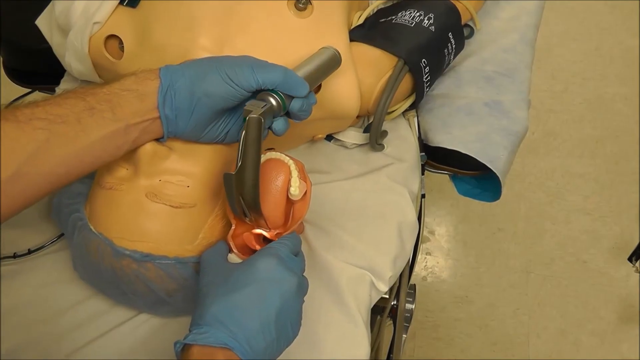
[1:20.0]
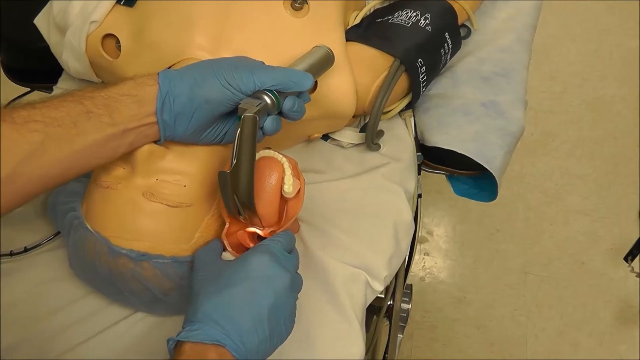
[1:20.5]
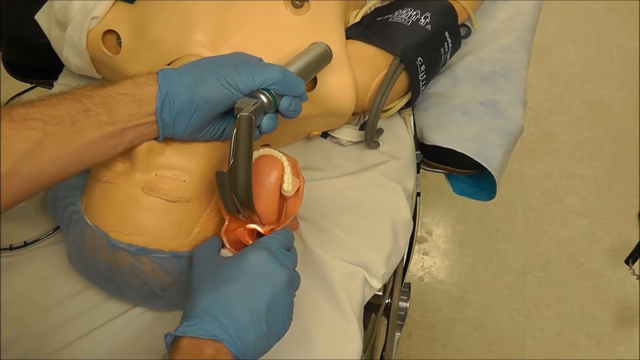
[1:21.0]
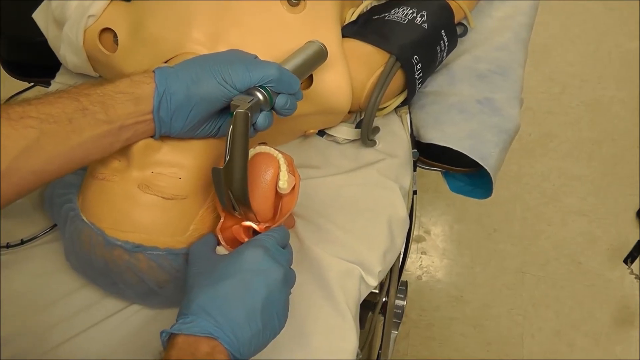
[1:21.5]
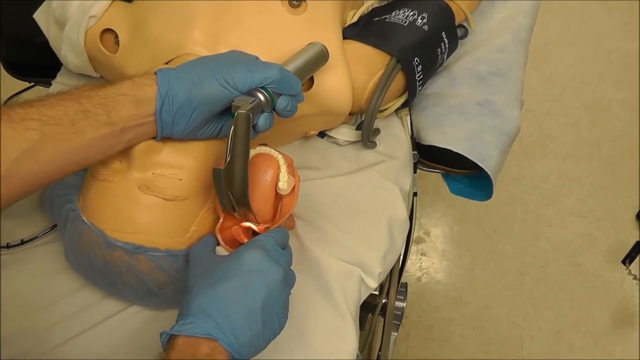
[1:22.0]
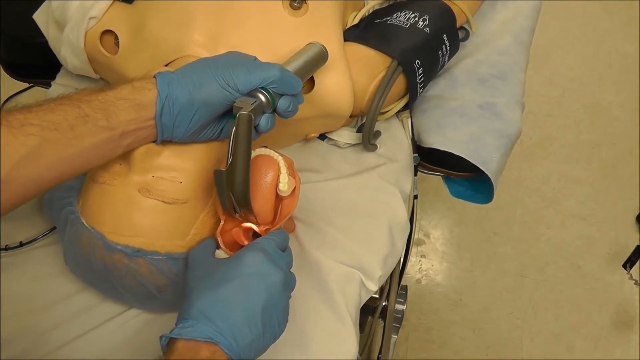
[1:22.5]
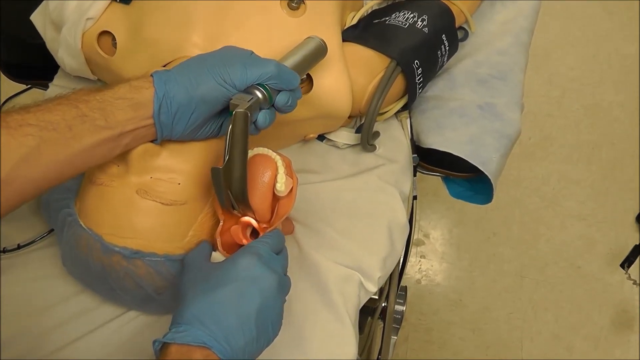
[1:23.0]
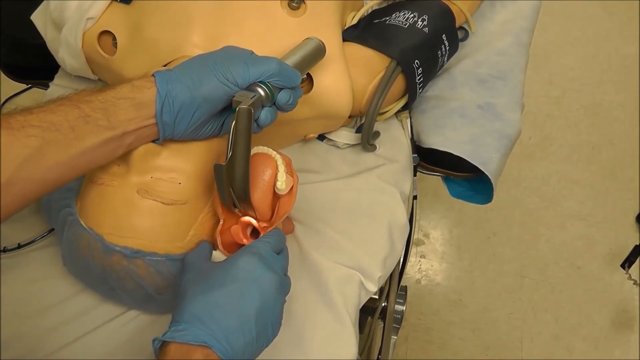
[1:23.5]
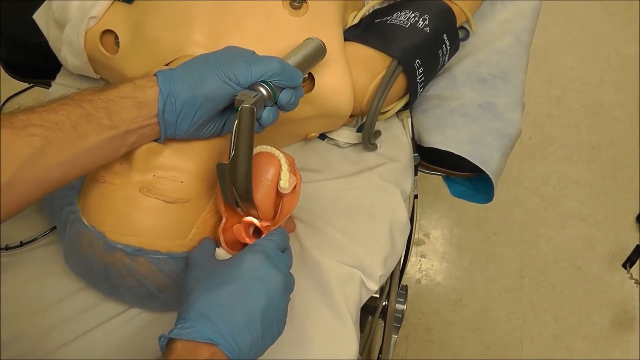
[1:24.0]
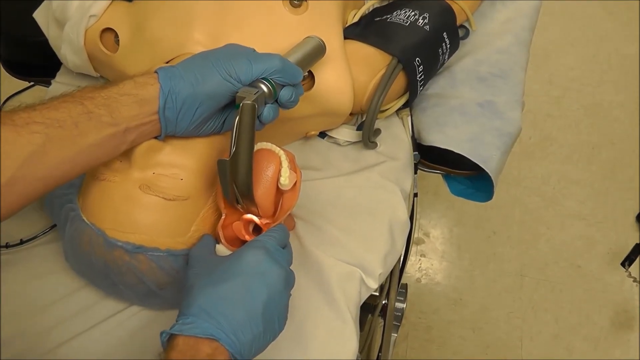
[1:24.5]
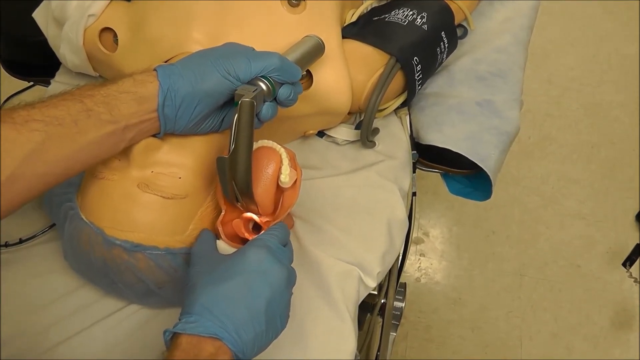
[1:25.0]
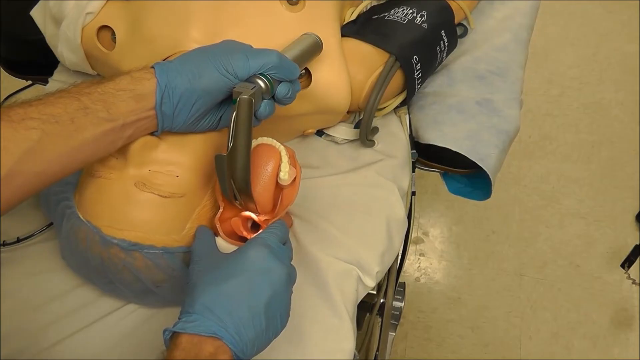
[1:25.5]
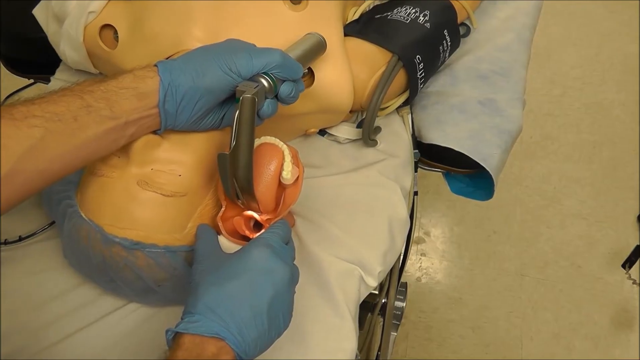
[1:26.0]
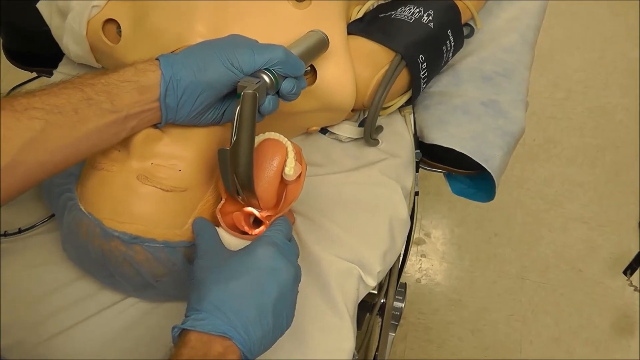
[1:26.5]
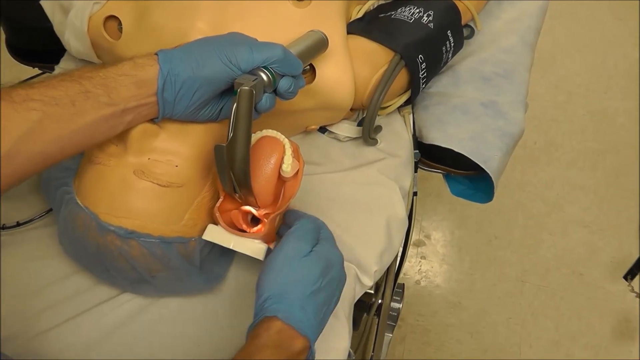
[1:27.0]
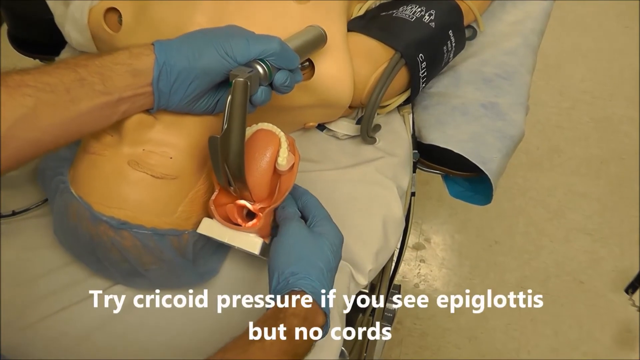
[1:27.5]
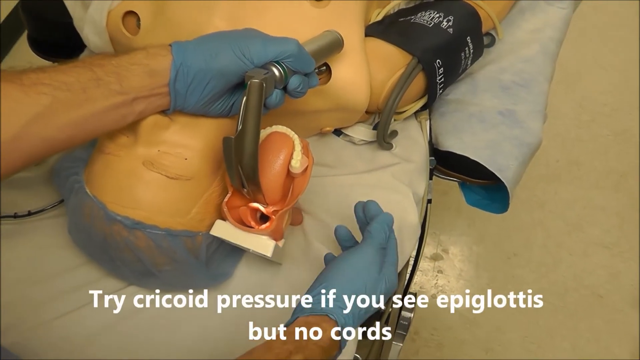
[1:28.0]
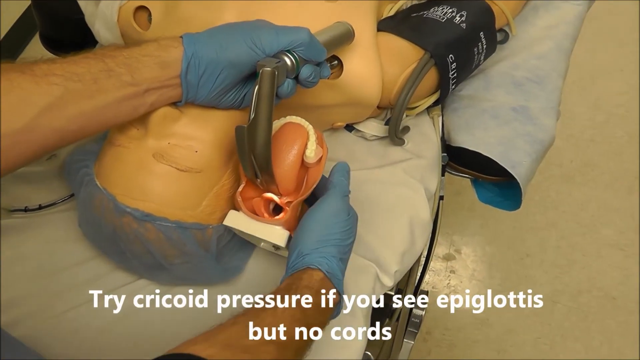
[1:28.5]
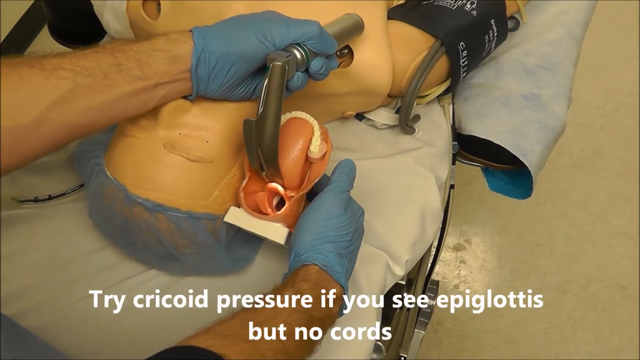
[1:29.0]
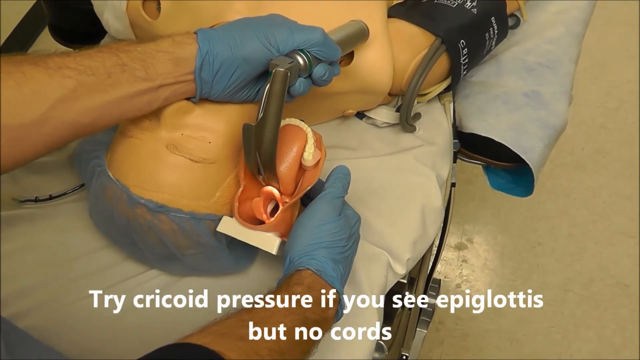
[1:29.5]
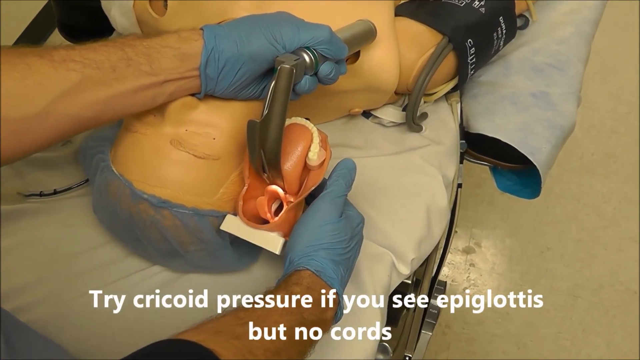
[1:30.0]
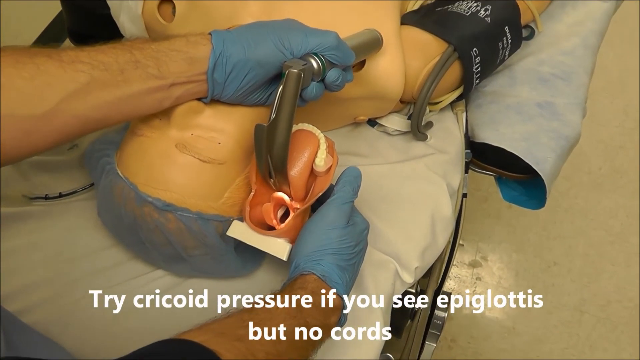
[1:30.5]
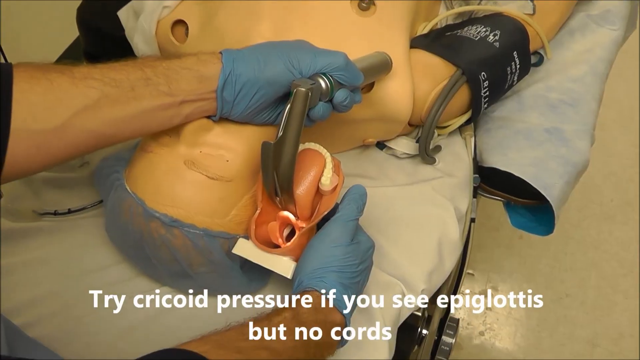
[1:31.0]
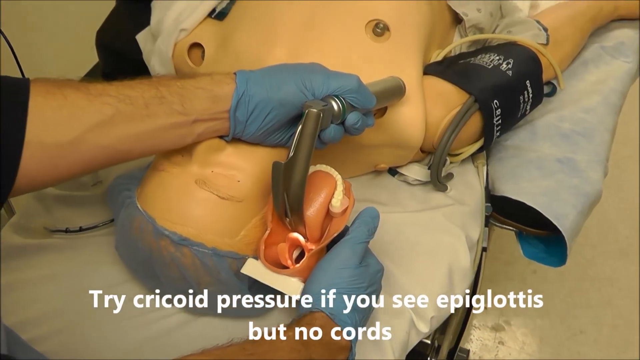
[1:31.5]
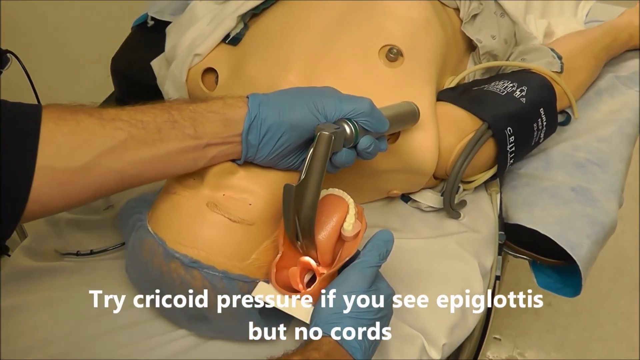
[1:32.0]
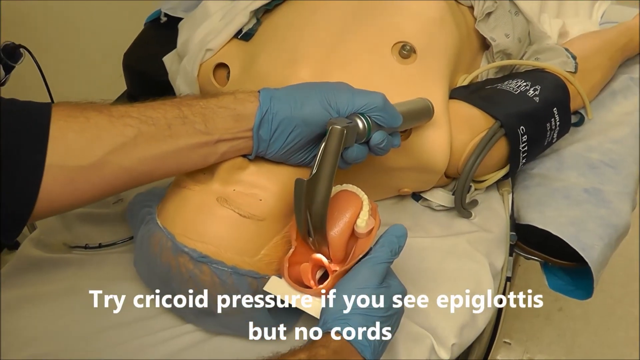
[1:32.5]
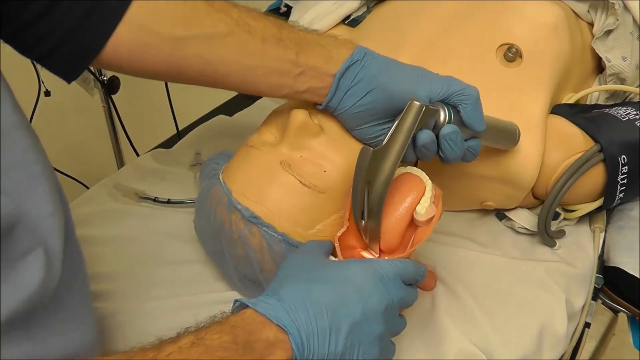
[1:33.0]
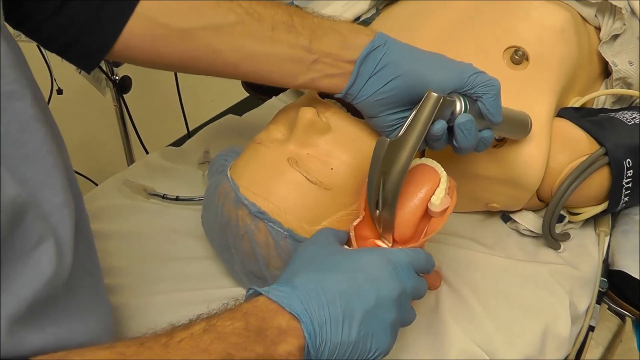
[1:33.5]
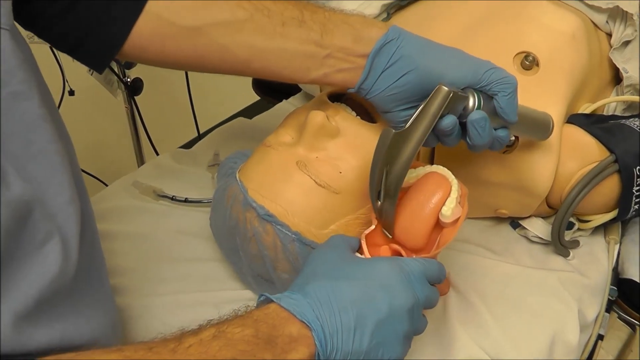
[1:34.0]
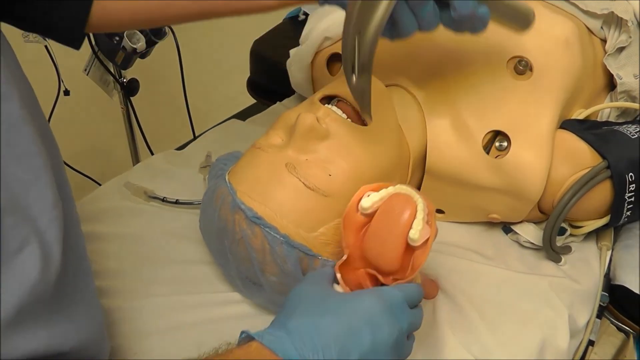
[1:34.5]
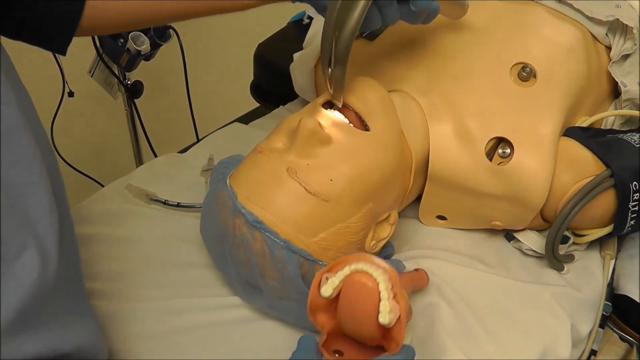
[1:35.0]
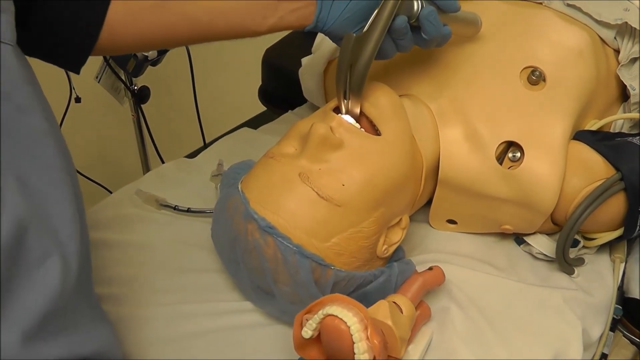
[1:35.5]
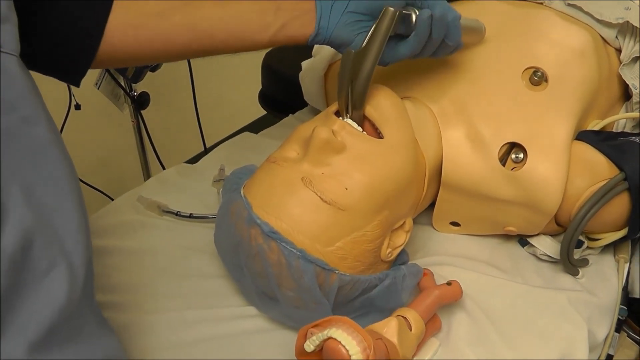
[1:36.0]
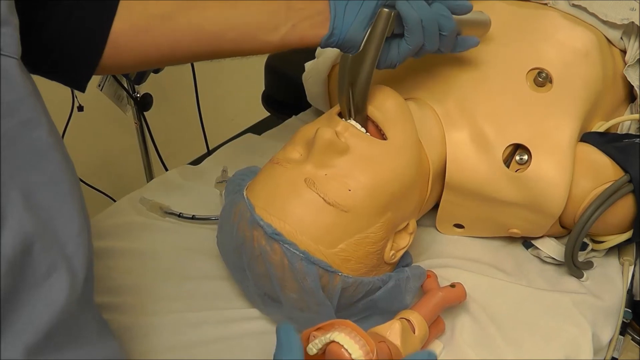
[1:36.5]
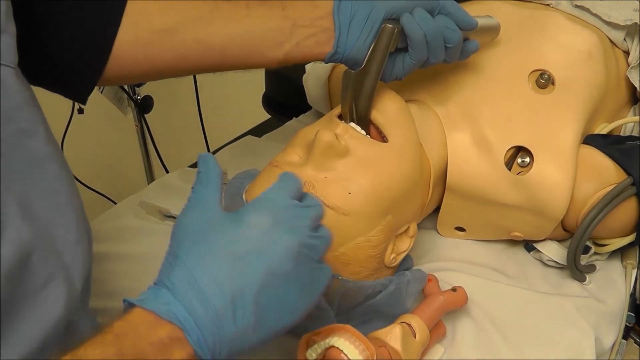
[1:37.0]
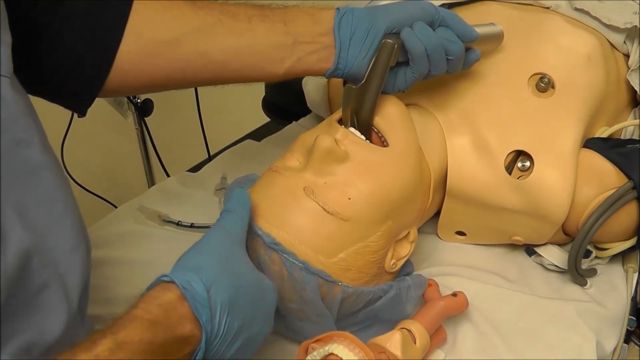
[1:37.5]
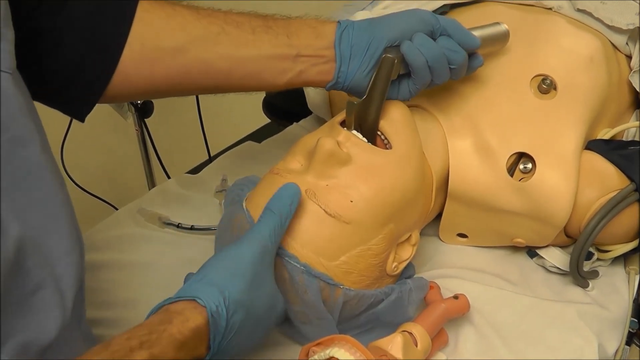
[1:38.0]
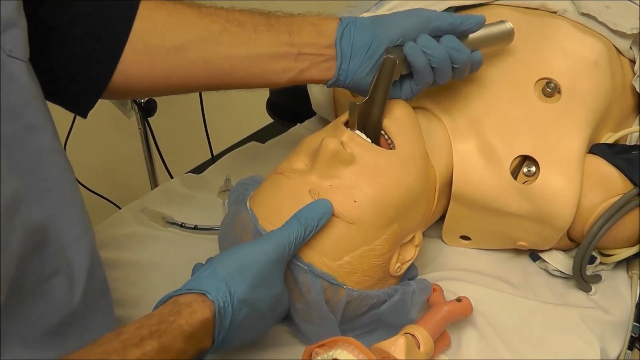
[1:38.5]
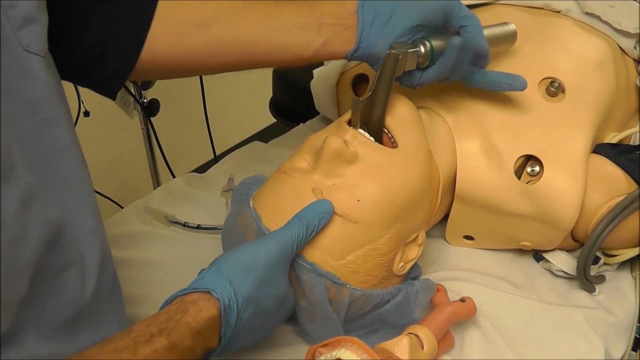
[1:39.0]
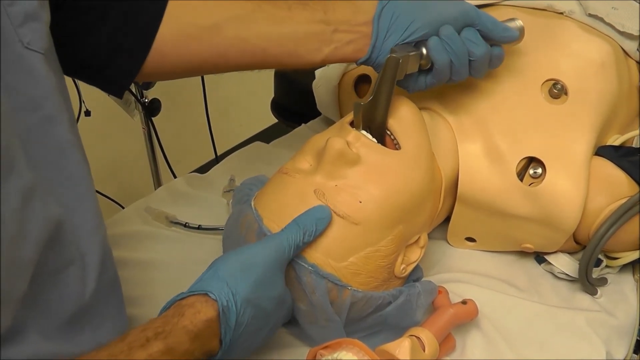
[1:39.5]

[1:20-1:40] Only the person's hands, in blue medical gloves, are visible as he holds a model of the mouth up next to the dummy's head on the gurney. He inserts an apparatus toward the back of the tongue on the right-hand side and pulls the tongue forward so the back of the throat can be seen. On-screen text reads "try cricoid pressure if you see epiglottis but no cords." There is a light on the end of the apparatus. He takes it out of the model of the mouth and puts it into the actual mouth of the dummy. The dummy's teeth are visible, its eyes are closed, it has a blood pressure cuff on, its shirt is partly on and partly off, and three holes can be seen in its chest.